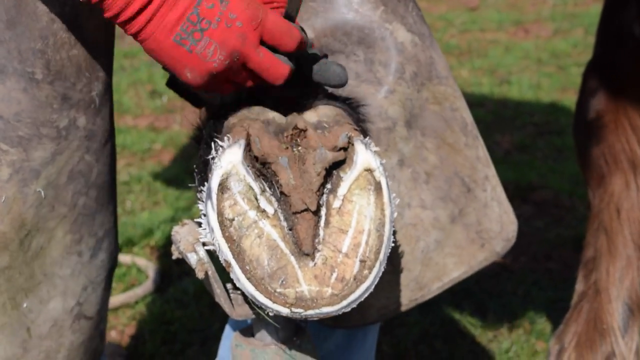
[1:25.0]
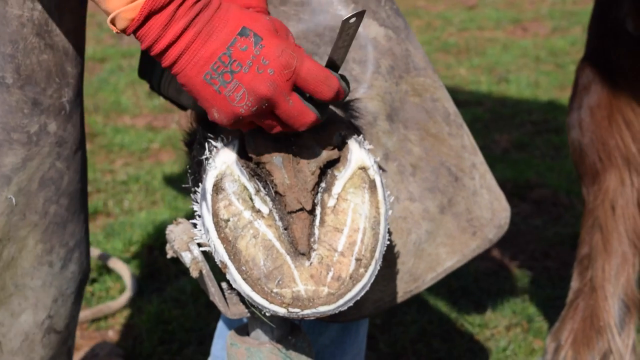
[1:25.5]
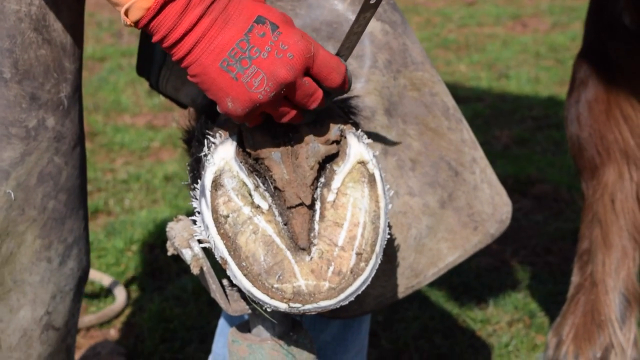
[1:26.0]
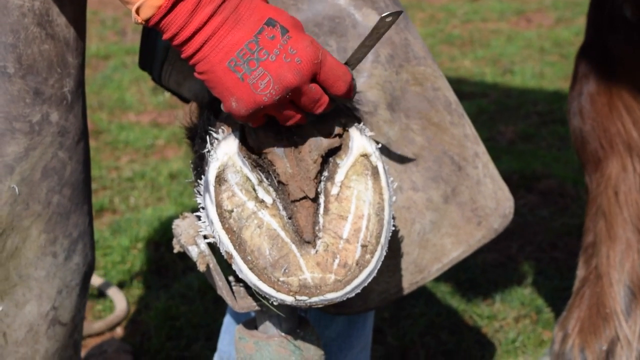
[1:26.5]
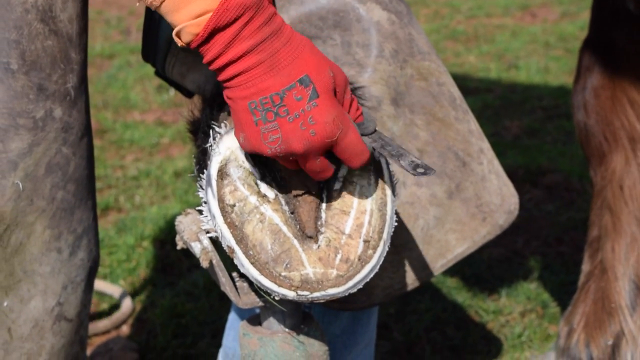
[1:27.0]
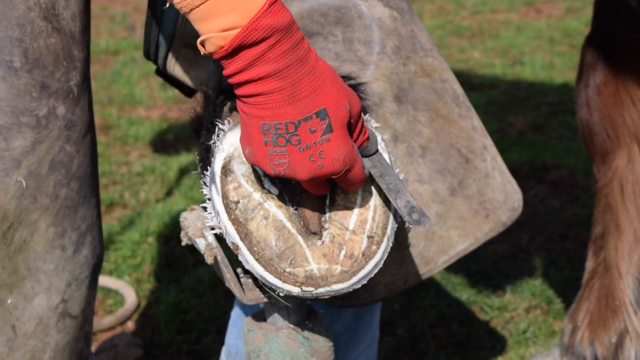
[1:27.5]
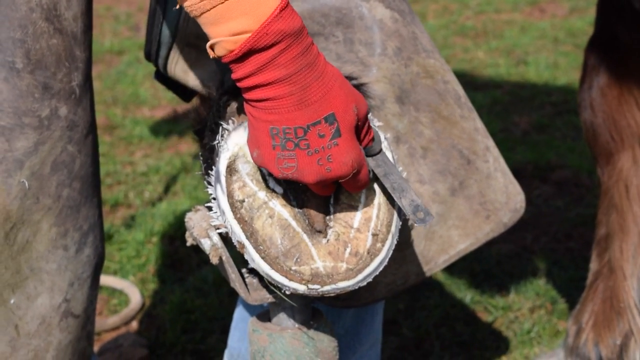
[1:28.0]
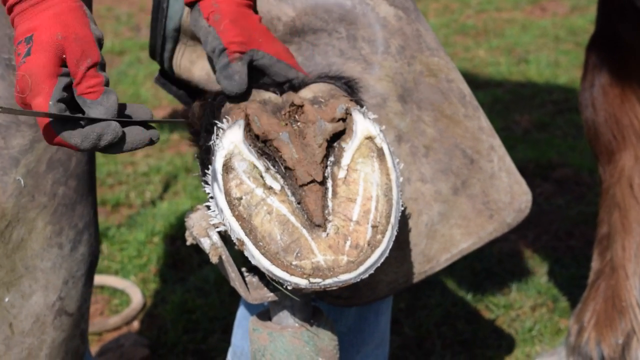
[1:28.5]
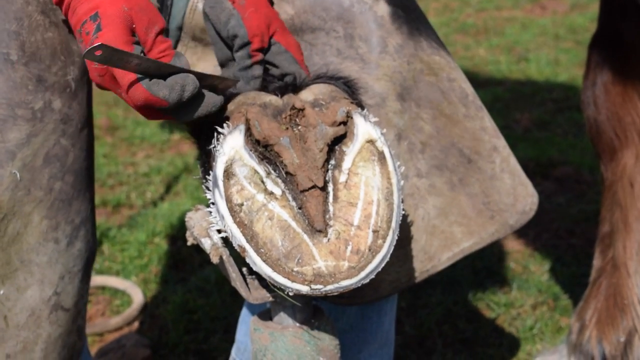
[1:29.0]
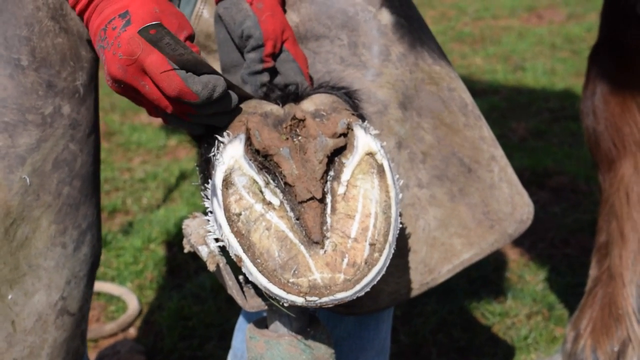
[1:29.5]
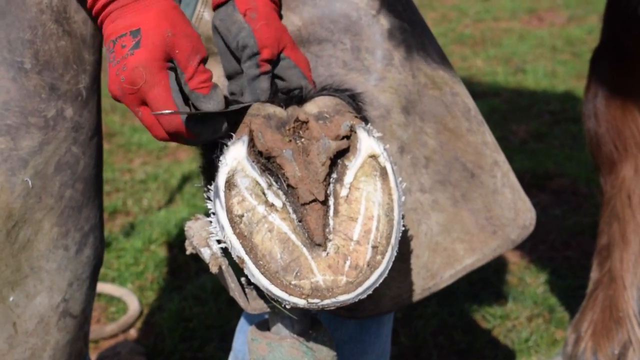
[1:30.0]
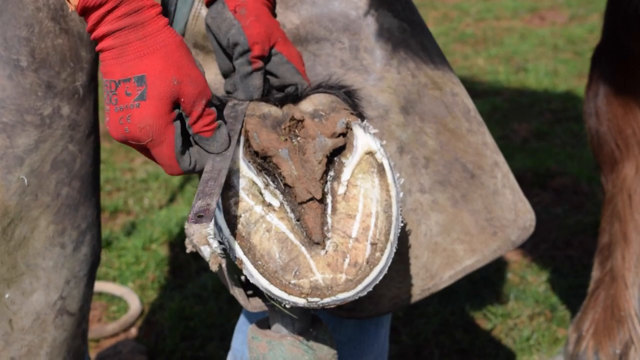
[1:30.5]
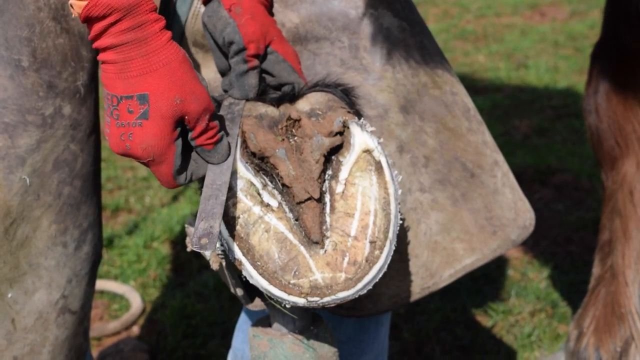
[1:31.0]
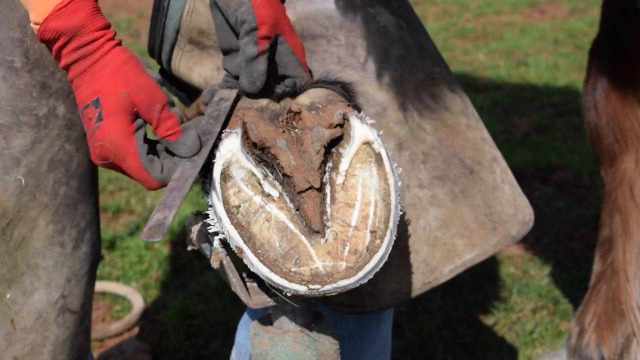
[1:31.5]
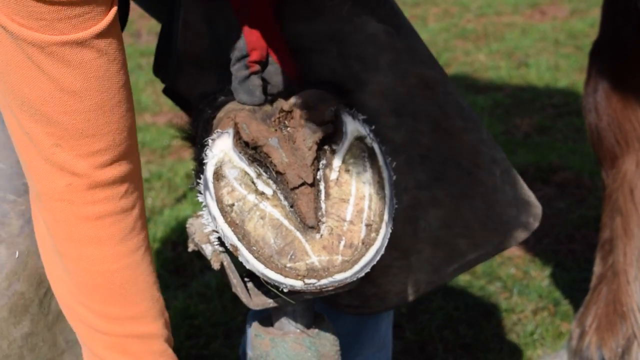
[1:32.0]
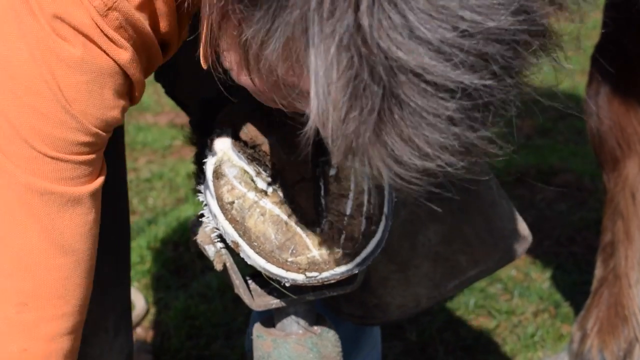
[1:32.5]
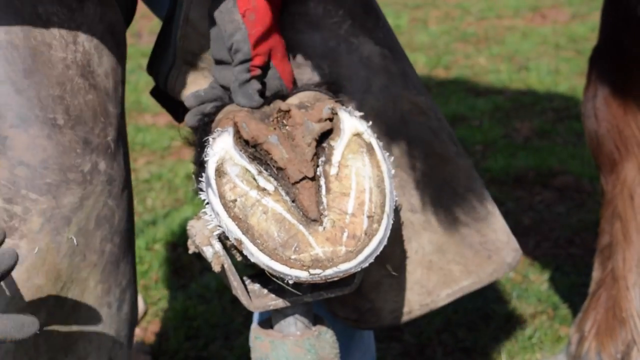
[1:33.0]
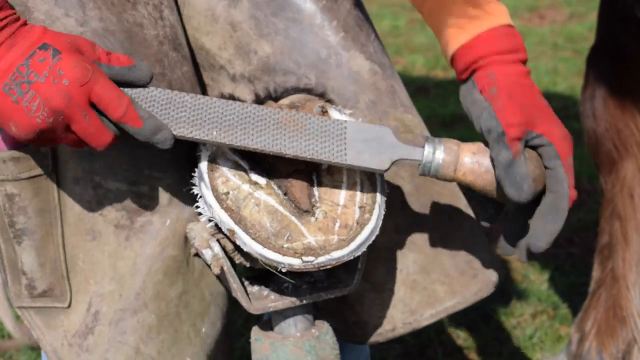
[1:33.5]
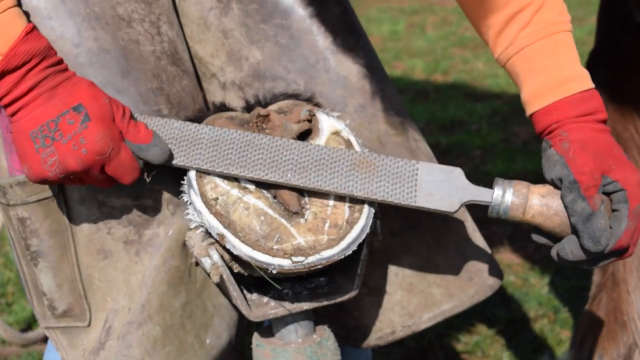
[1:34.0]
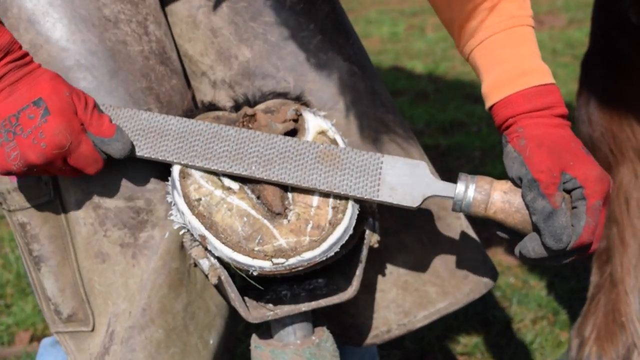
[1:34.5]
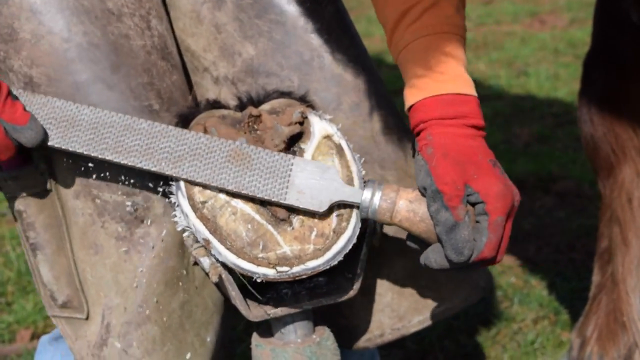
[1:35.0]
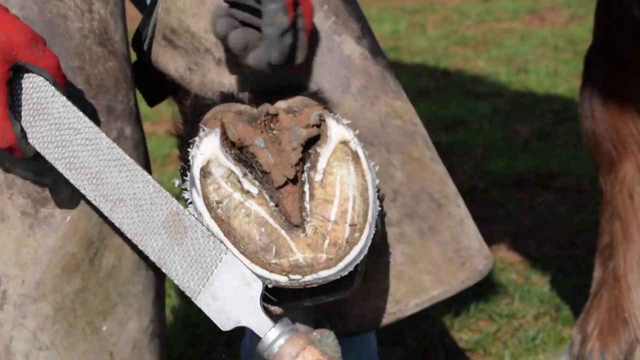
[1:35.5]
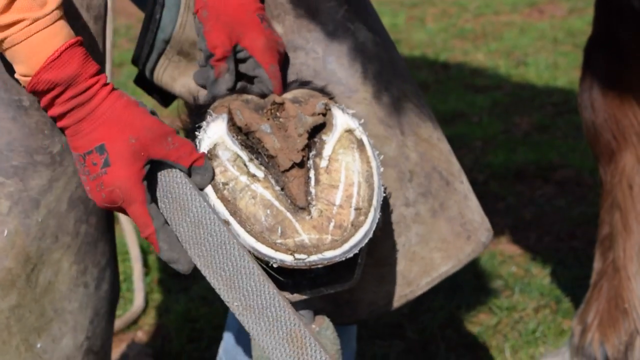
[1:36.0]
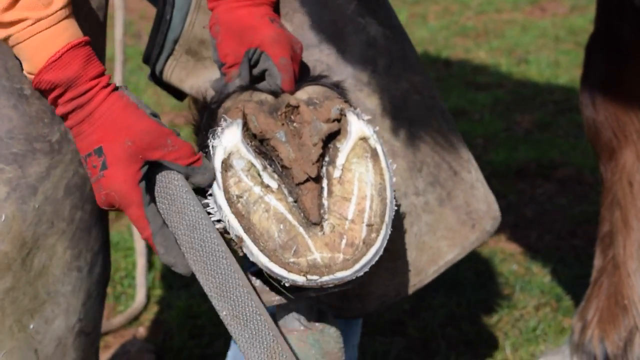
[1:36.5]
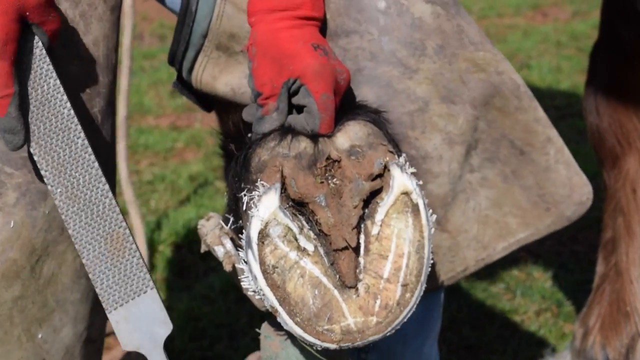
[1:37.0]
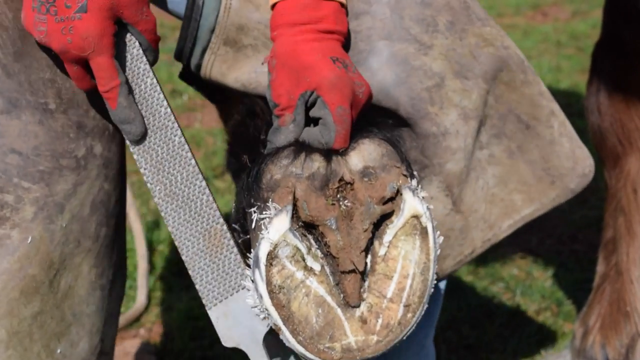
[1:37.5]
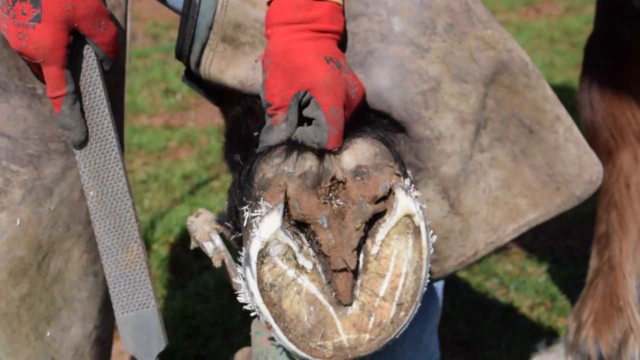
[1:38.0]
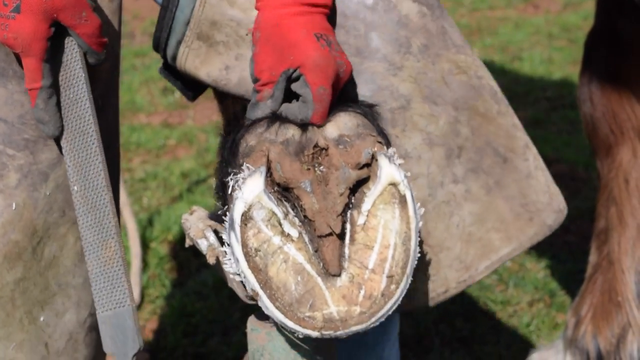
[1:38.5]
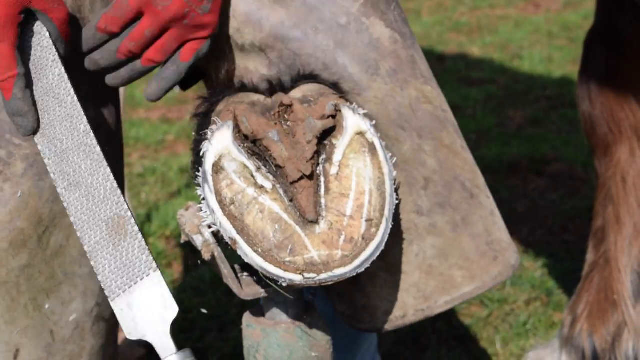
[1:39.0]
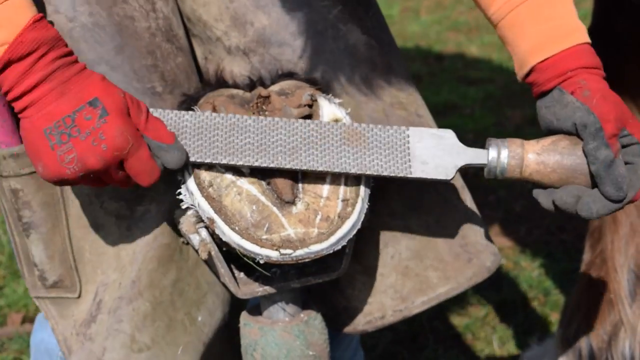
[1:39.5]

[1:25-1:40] The smaller tool that looked like a file is just a smooth piece of metal; she puts it into a spot and appears to be gently pulling up some fur from around the hoof. She puts it down, grabs the bigger file, and adjusts the hoof, looking at it, apparently to see if it is even. She files a little section that seemingly was not even, then goes back to filing the brown triangle-looking spot. Her shadow and the horse's shadows are visible as she files. The horse stands very still and has not budged, its hair blowing in the slight breeze. As she switches from tool to tool, she adjusts the hoof a little more, looking to make sure it is even.